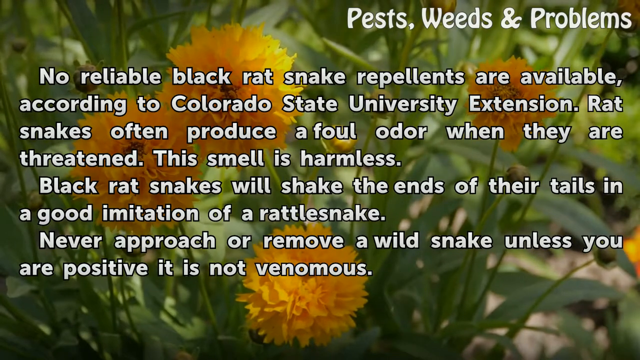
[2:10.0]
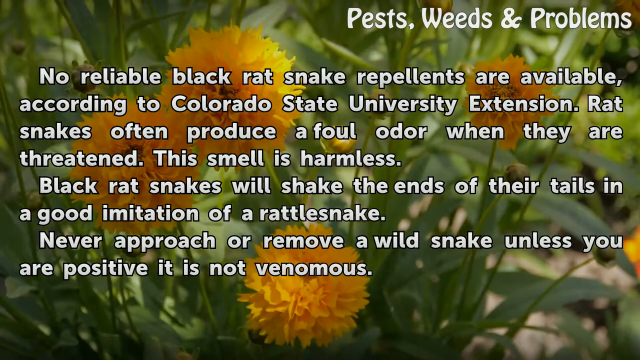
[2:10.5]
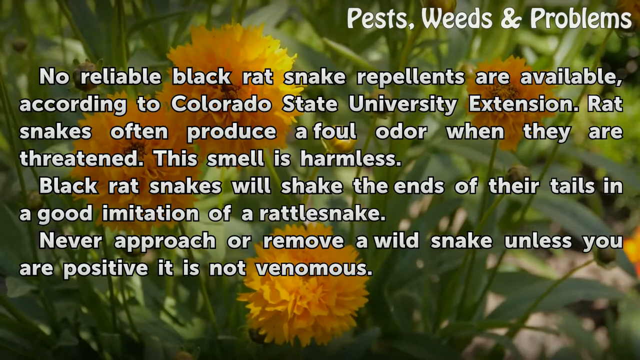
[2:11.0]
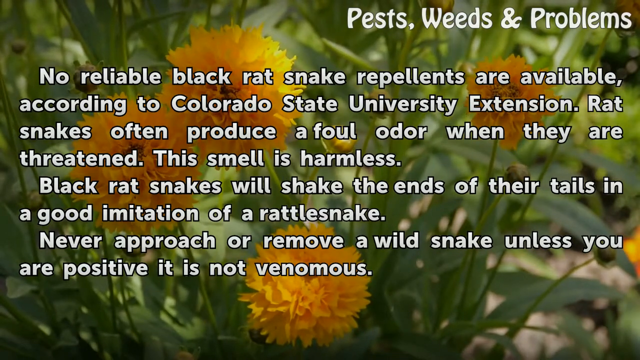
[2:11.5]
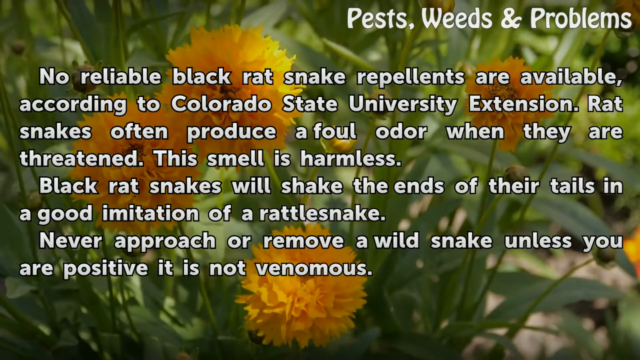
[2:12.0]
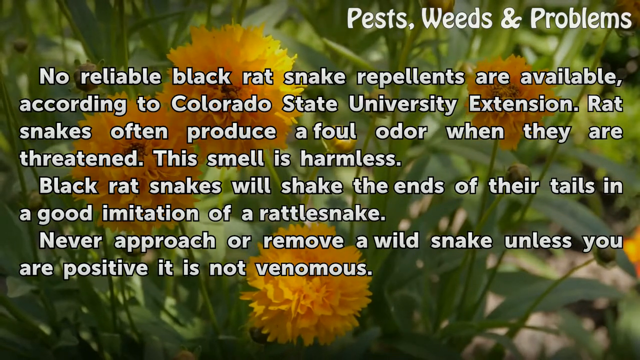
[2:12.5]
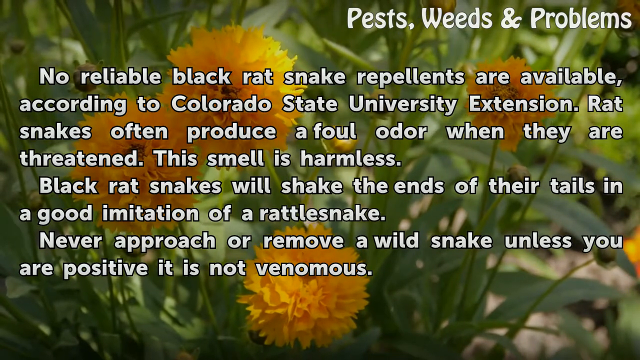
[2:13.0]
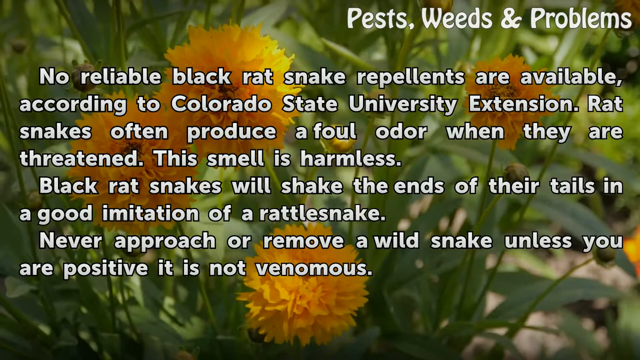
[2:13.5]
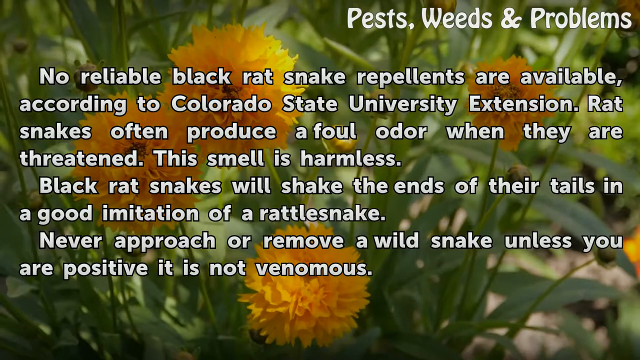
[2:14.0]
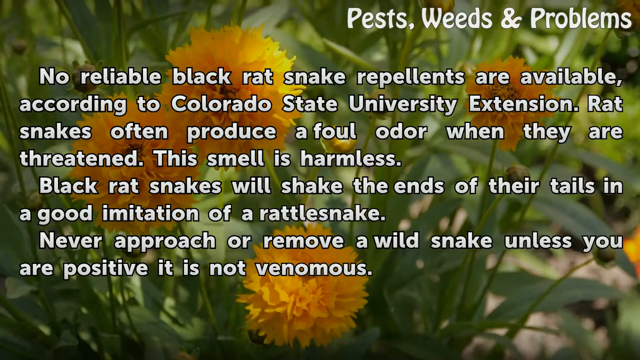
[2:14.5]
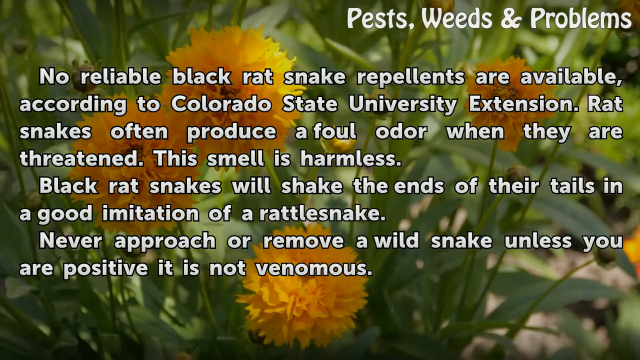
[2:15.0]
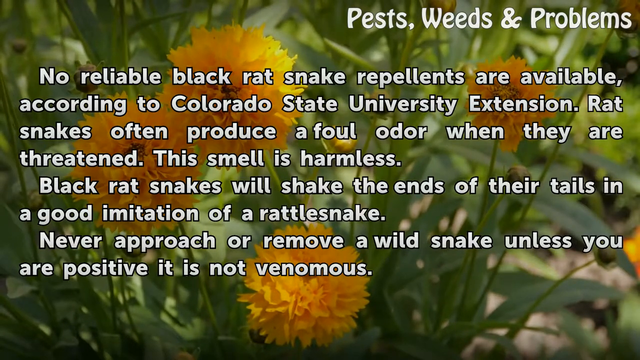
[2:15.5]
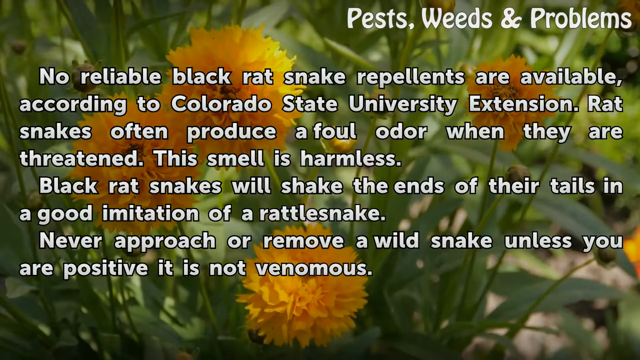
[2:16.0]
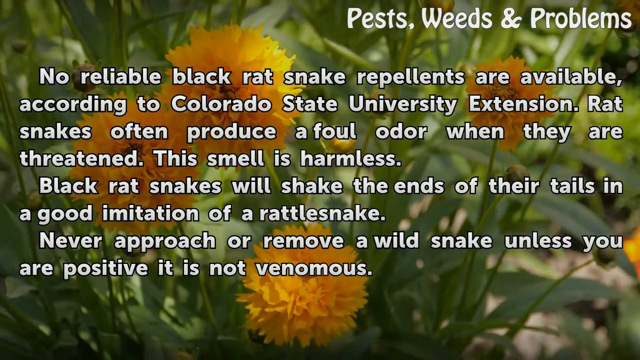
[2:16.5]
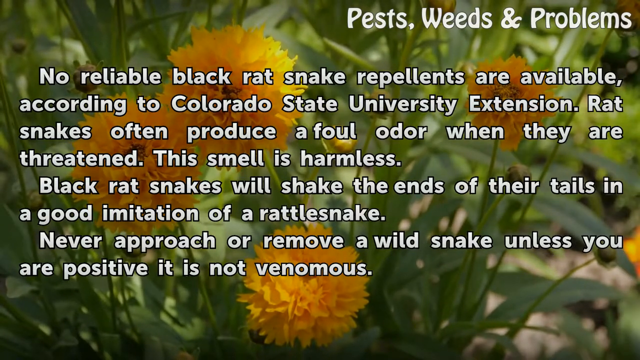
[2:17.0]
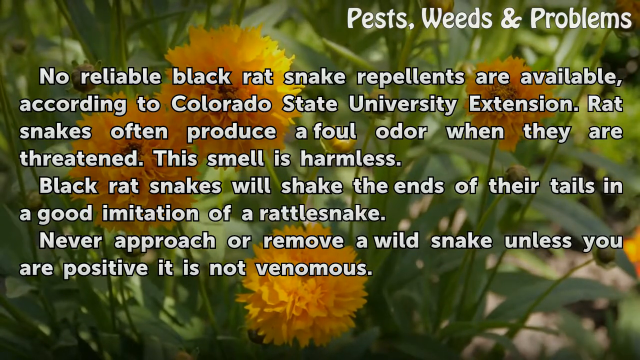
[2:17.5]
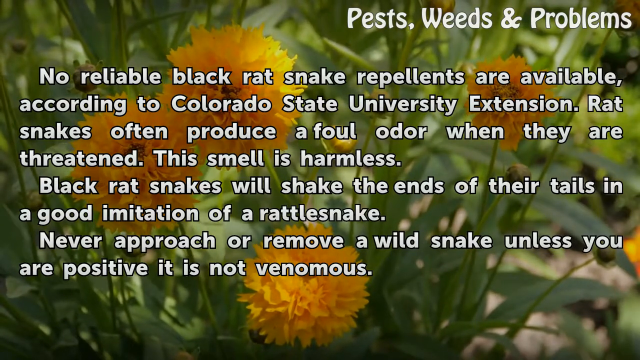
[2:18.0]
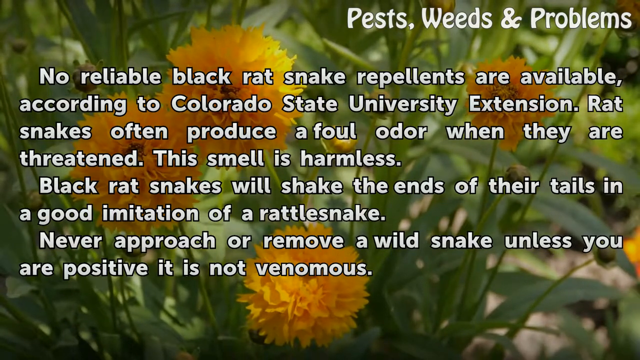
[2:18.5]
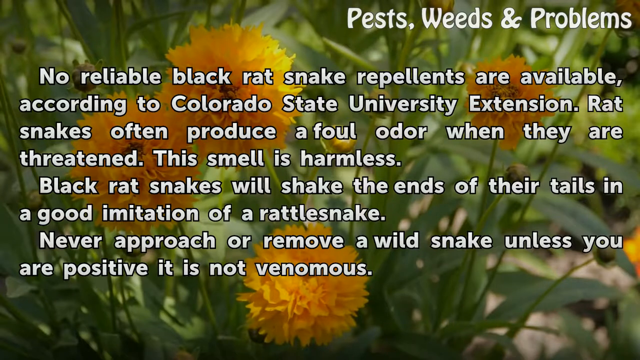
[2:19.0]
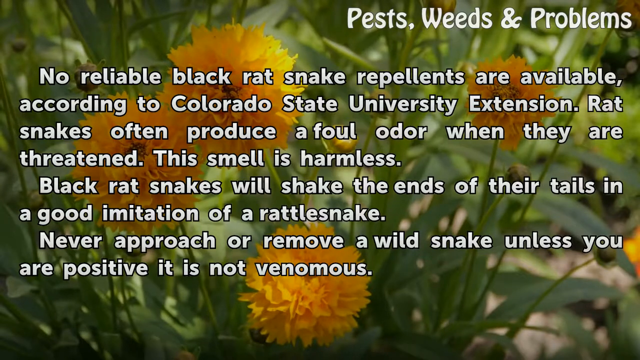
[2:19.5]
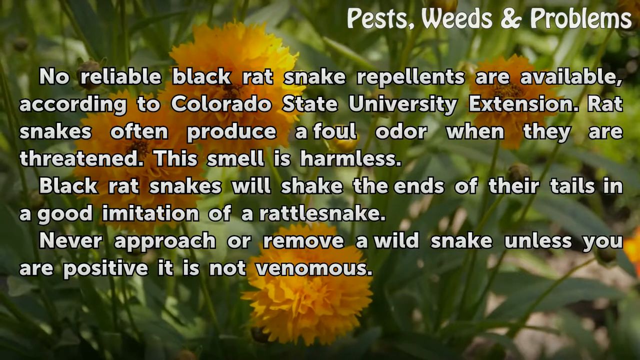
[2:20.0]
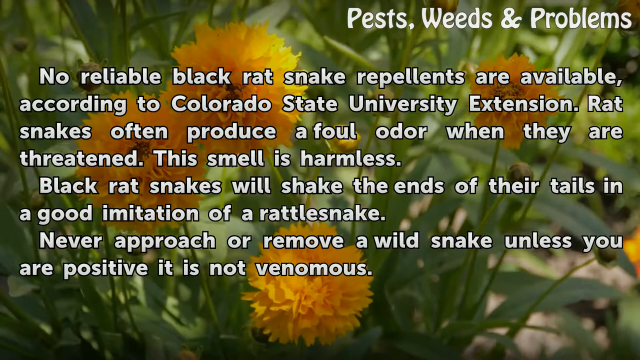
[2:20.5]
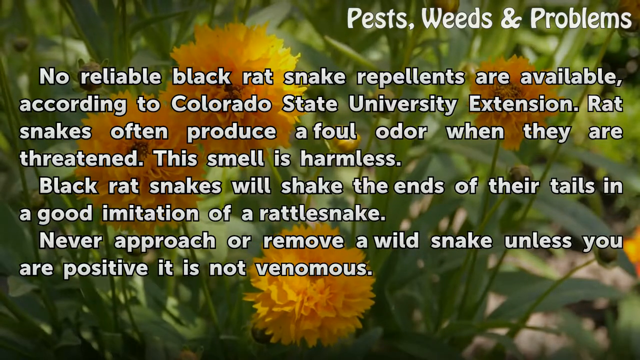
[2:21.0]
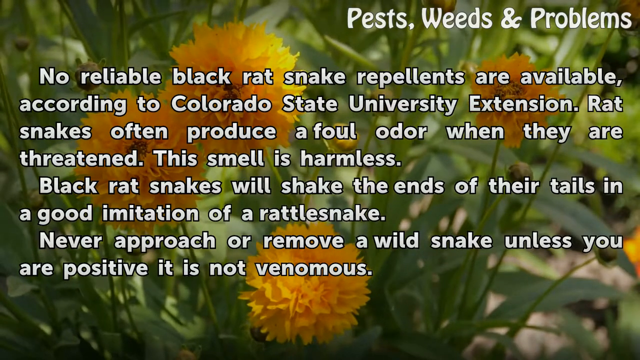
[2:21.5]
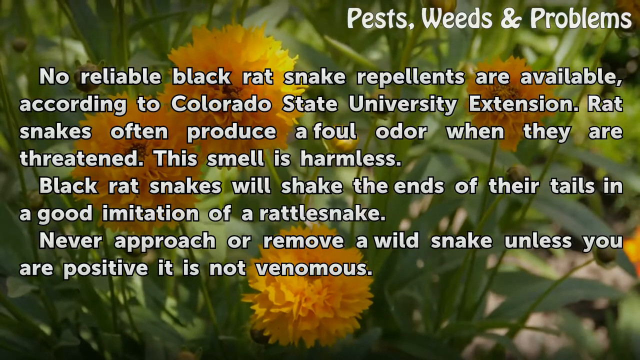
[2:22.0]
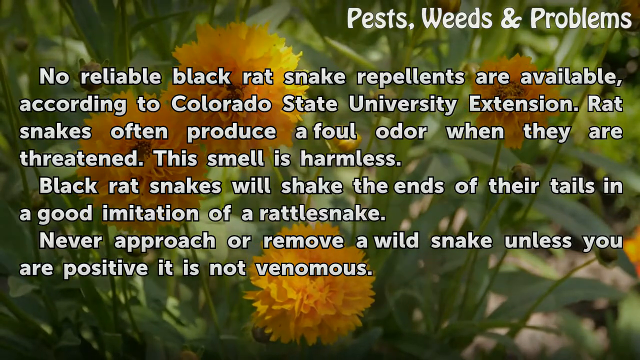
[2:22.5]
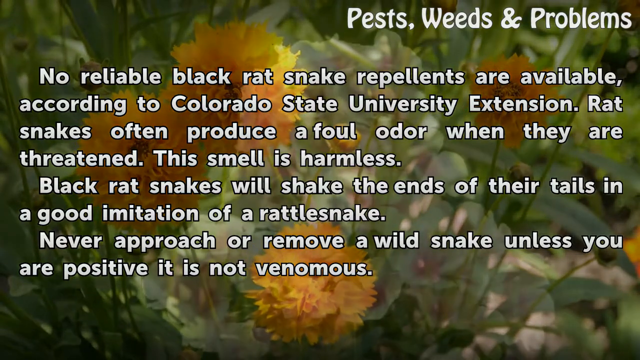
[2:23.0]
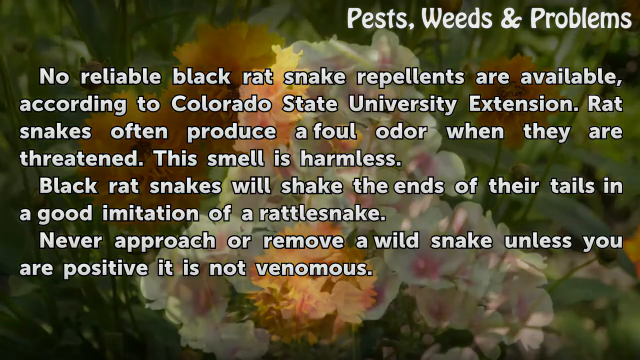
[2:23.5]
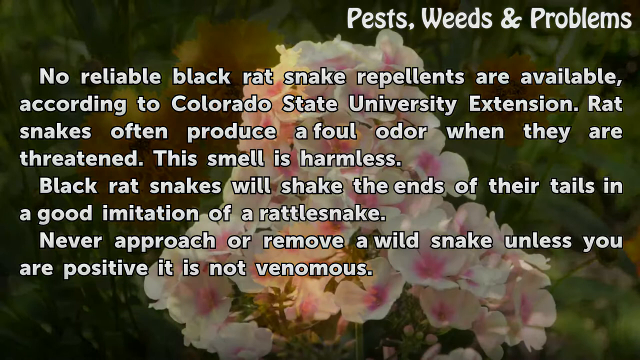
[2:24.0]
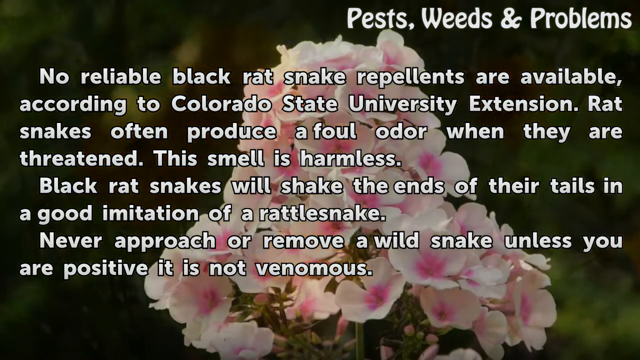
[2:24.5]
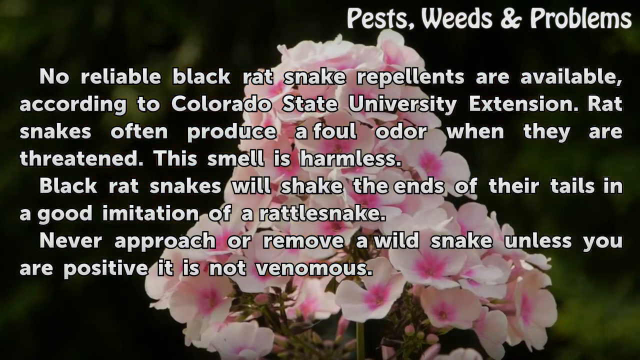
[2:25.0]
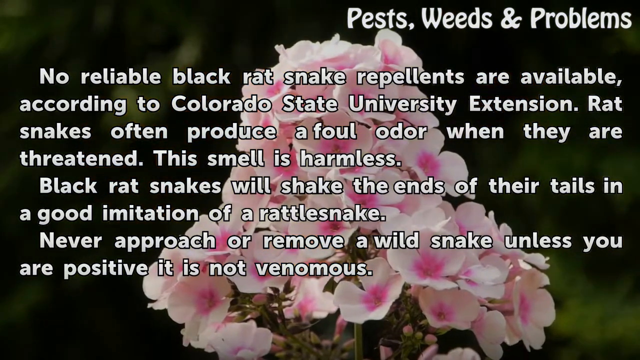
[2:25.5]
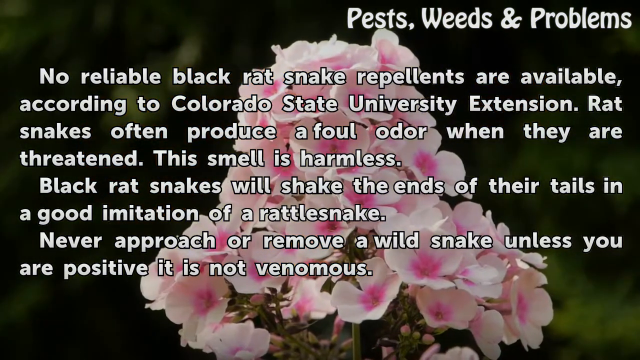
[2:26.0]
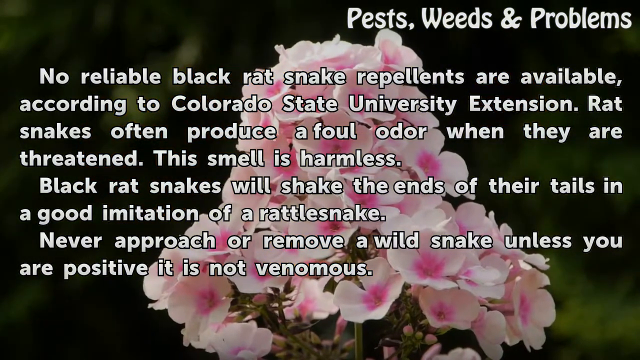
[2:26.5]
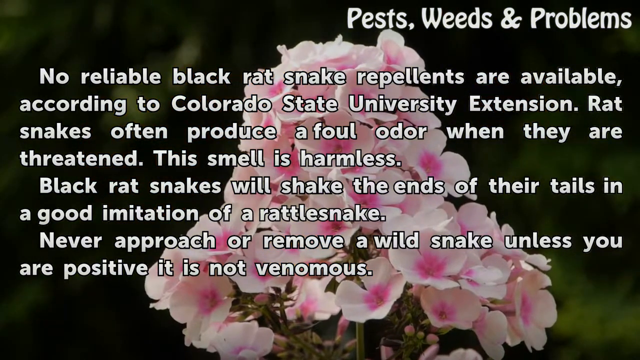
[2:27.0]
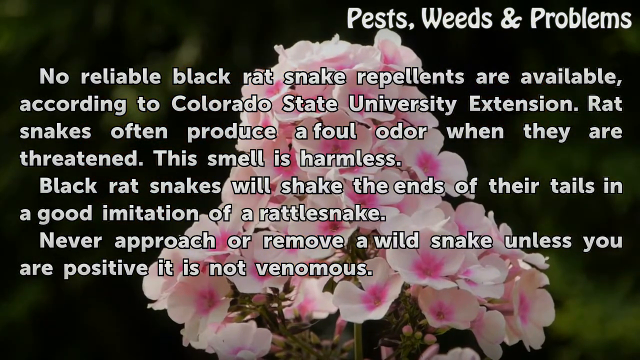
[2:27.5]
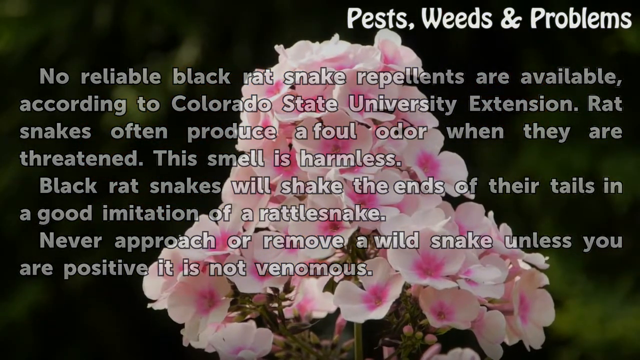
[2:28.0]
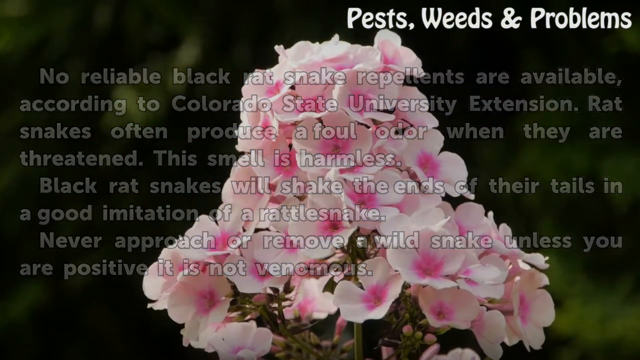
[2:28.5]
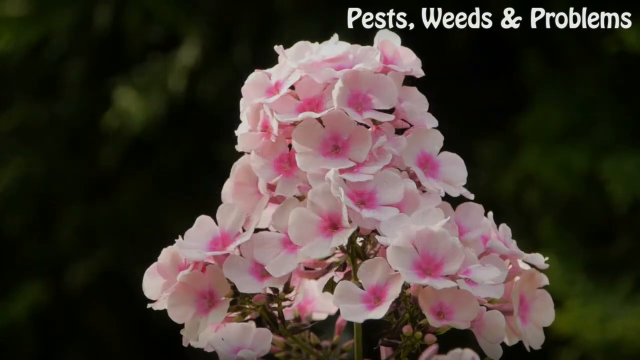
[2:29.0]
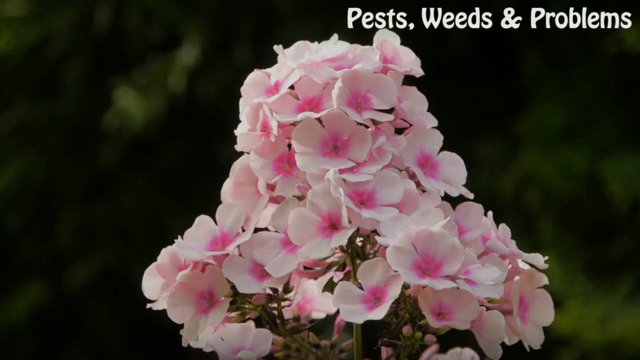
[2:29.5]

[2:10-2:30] The background has green leaves and green stems, with at least four yellow flowers that have sharp-edged petals and slightly brown centers. White lettering at the top right reads "pests, weeds, and problems." White lettering running from the middle downward says "no reliable black rat snake repellents are available. According to Colorado State University Extension, rat snakes often produce a foul odor when they are threatened. This smell is harmless. Black rat snakes will shake the ends of their tails in a good imitation of a rattlesnake. Never approach or remove a wild snake unless you are positive it is not venomous." The background then changes to a mostly black background, and in the center is a flower with white petals and a pink center, all bunched together almost like a cone: rounded at the bottom, running upward somewhat narrowly, and finishing rounded at the top.